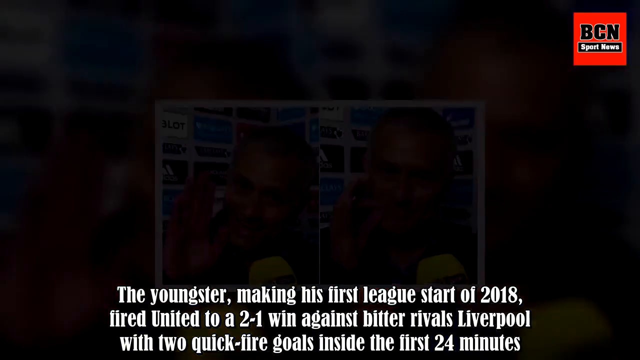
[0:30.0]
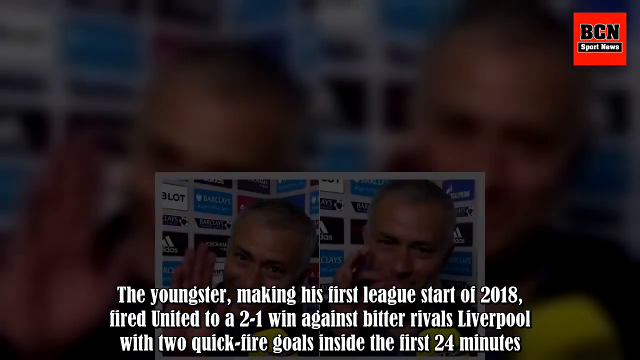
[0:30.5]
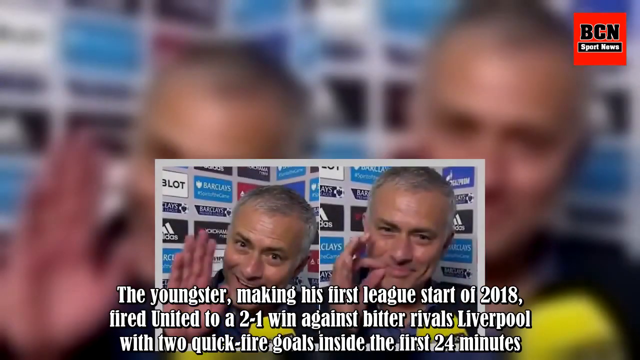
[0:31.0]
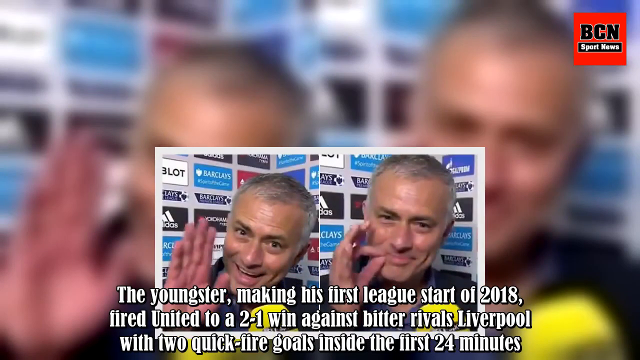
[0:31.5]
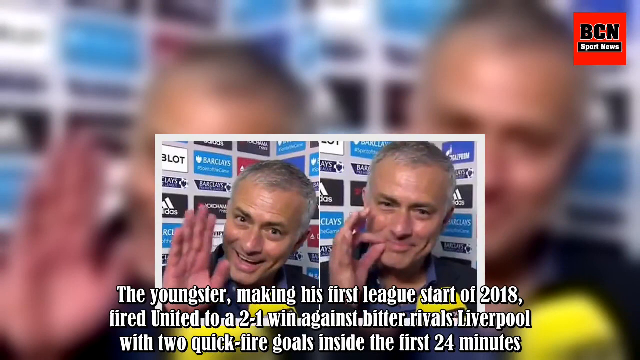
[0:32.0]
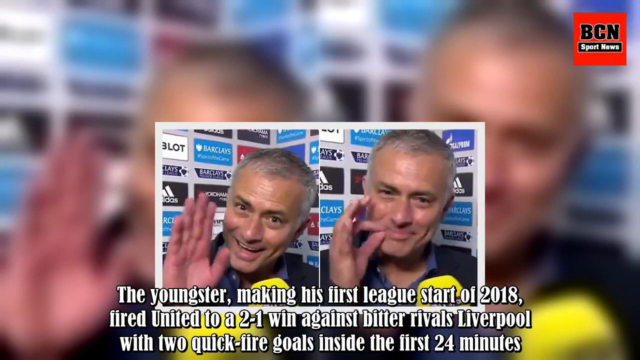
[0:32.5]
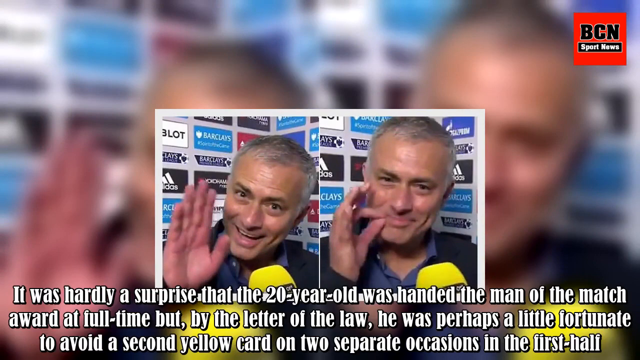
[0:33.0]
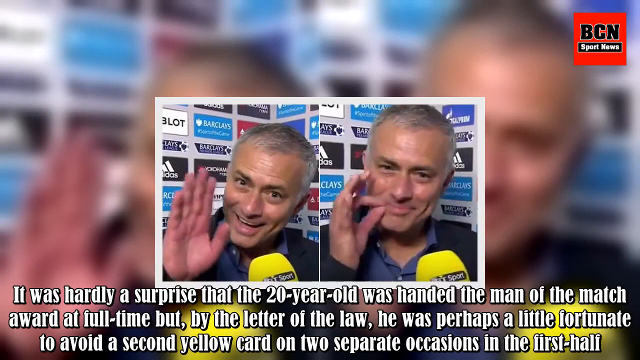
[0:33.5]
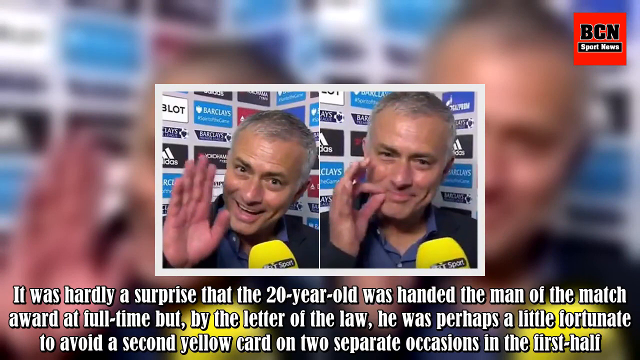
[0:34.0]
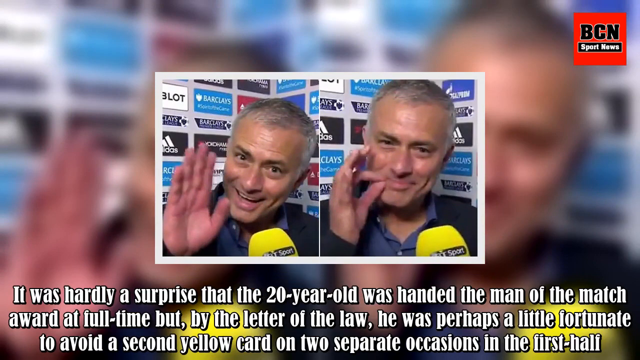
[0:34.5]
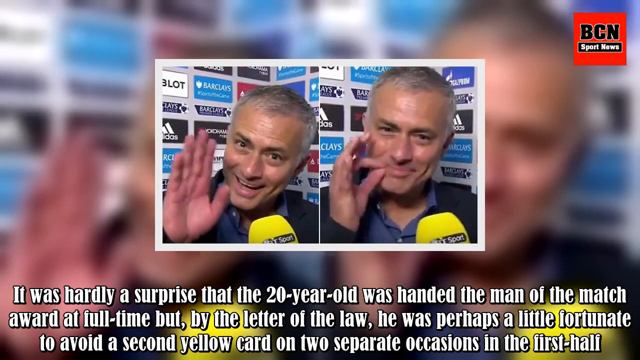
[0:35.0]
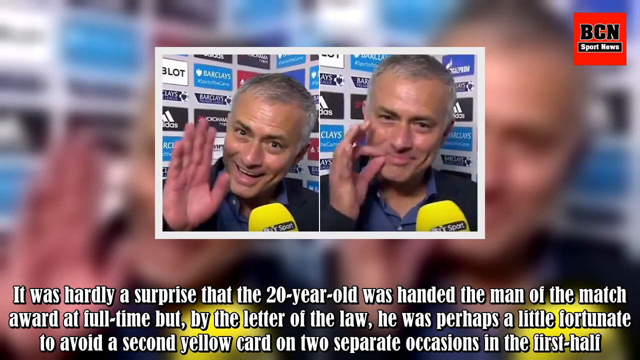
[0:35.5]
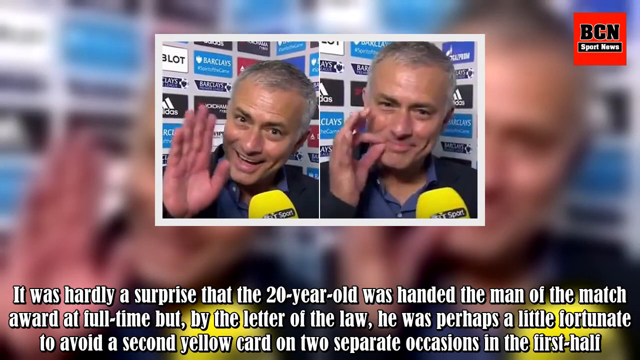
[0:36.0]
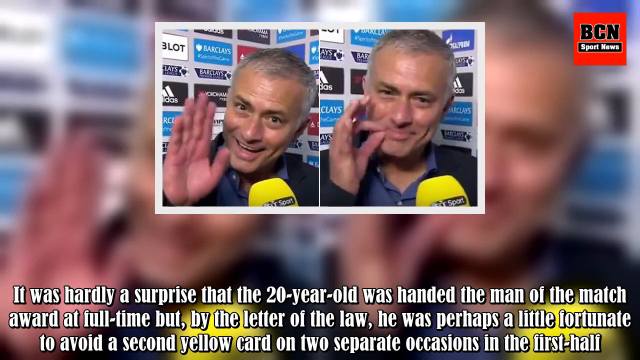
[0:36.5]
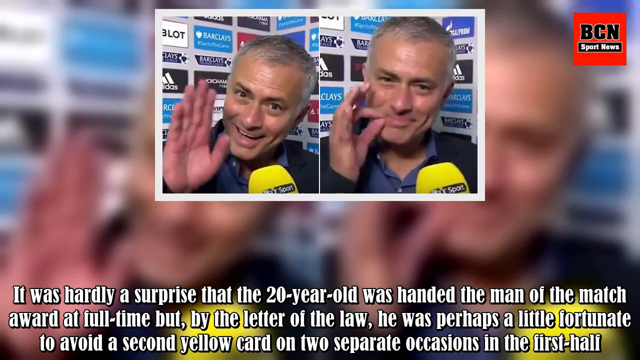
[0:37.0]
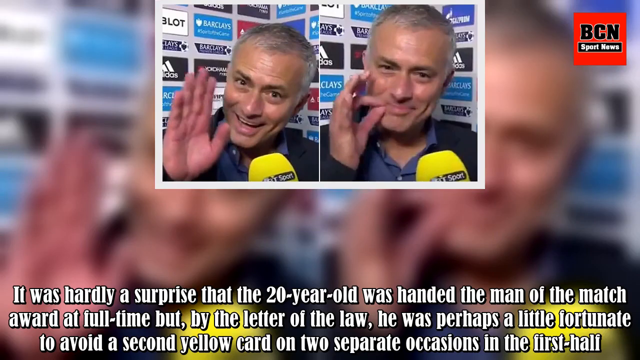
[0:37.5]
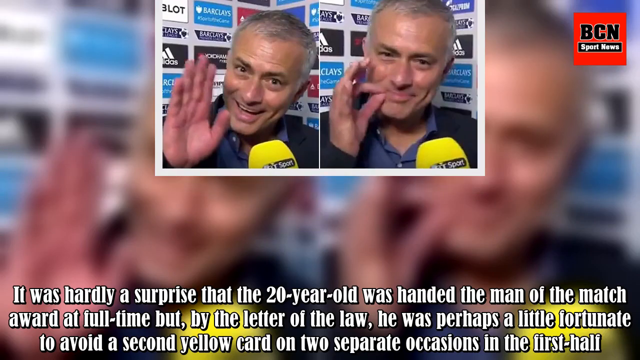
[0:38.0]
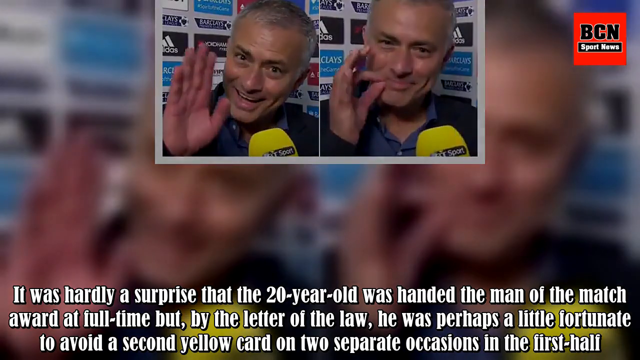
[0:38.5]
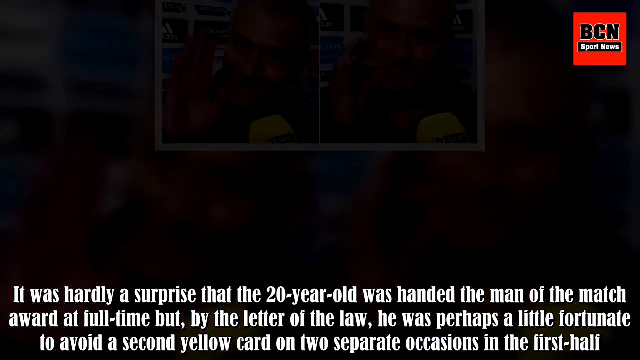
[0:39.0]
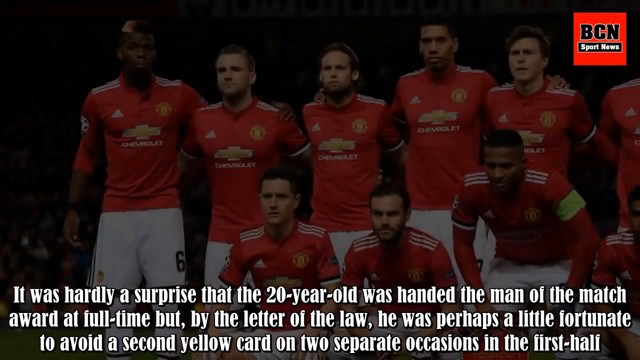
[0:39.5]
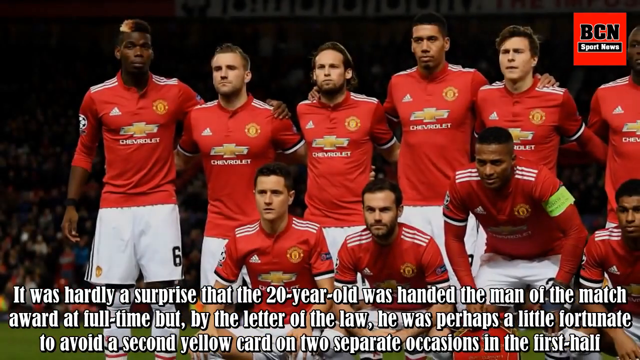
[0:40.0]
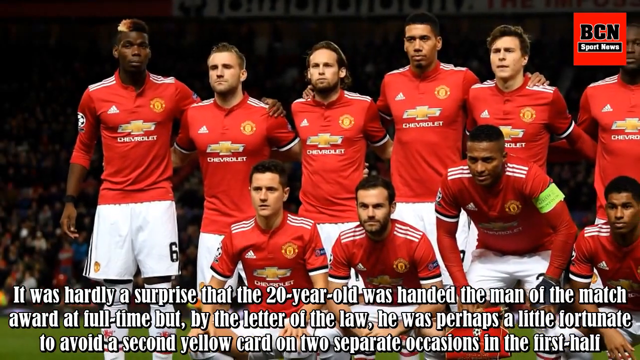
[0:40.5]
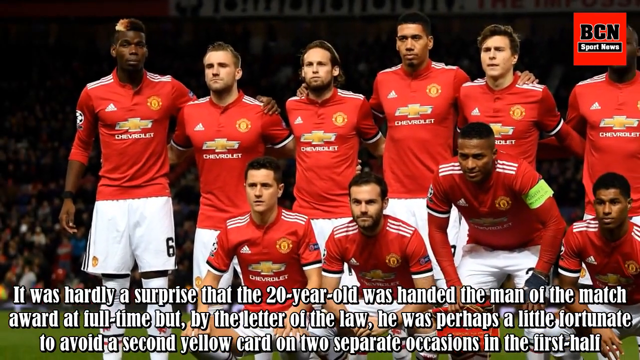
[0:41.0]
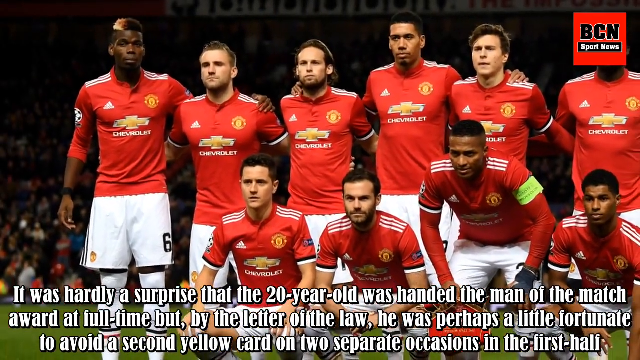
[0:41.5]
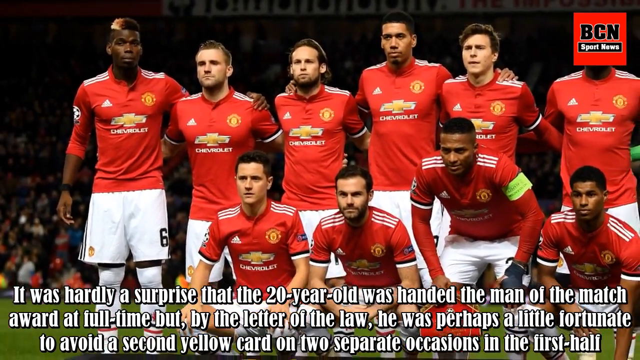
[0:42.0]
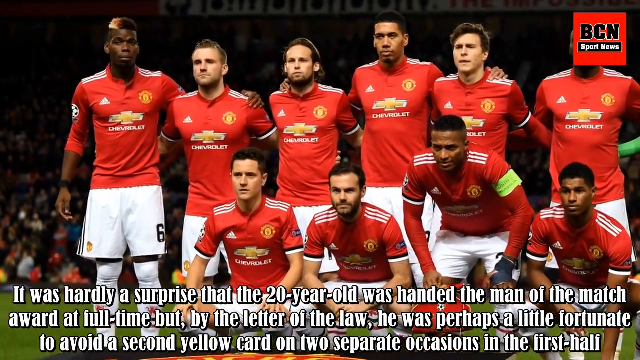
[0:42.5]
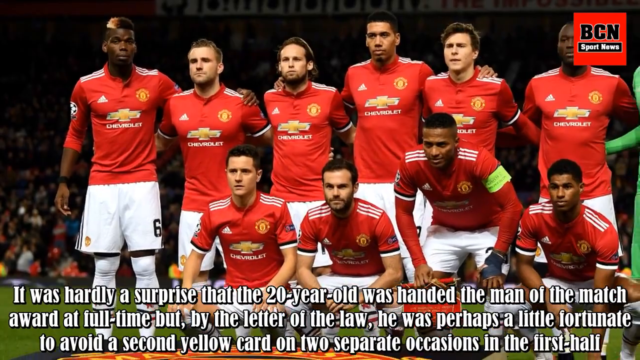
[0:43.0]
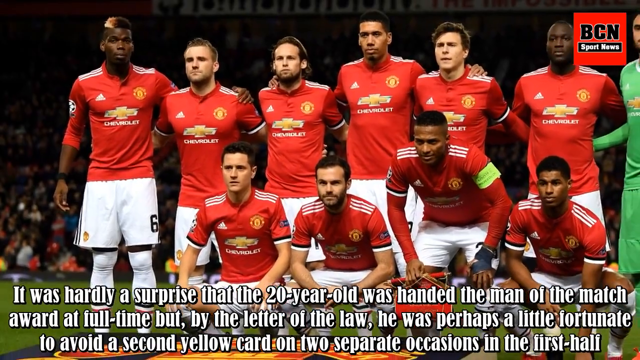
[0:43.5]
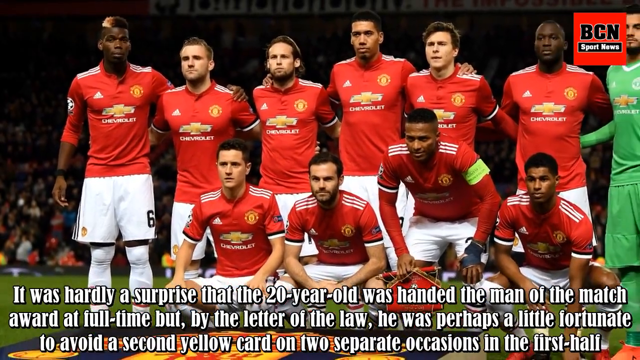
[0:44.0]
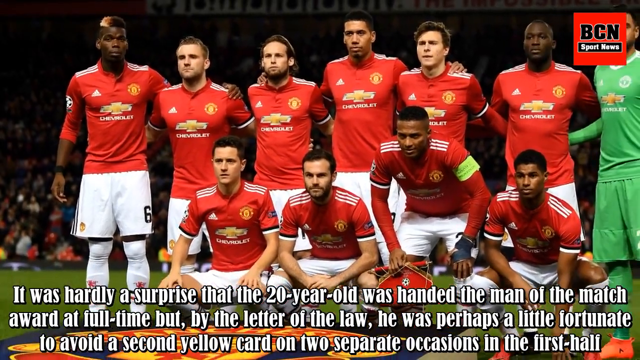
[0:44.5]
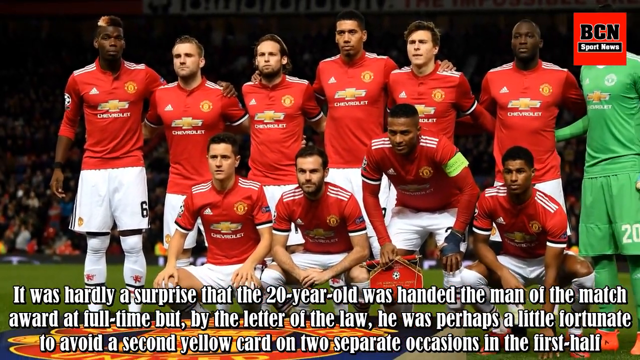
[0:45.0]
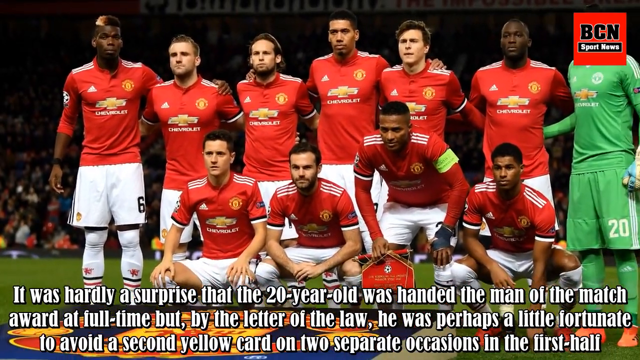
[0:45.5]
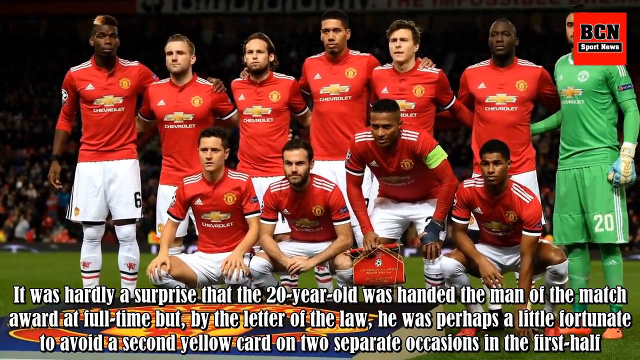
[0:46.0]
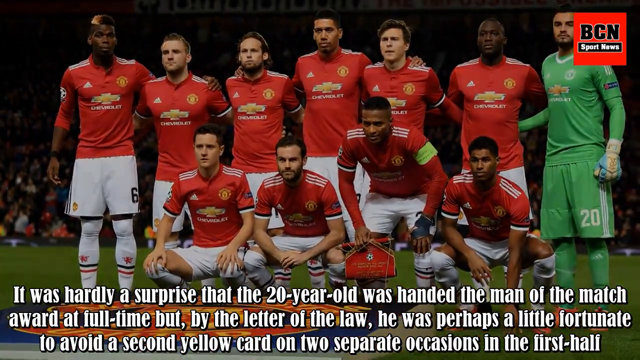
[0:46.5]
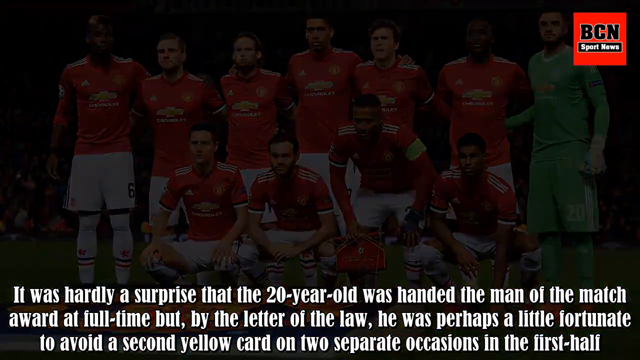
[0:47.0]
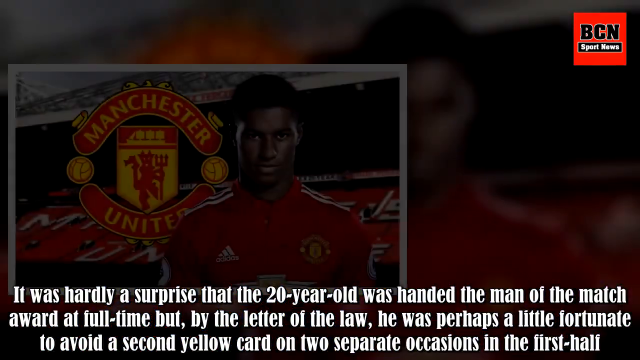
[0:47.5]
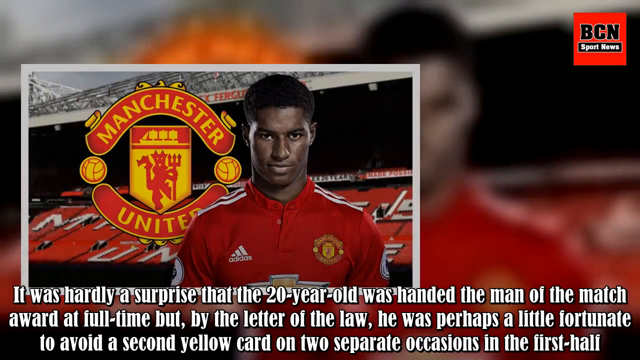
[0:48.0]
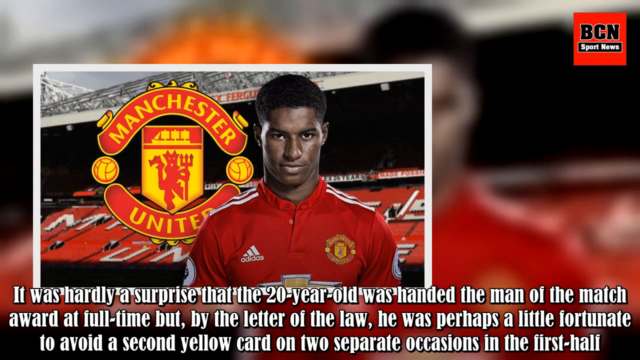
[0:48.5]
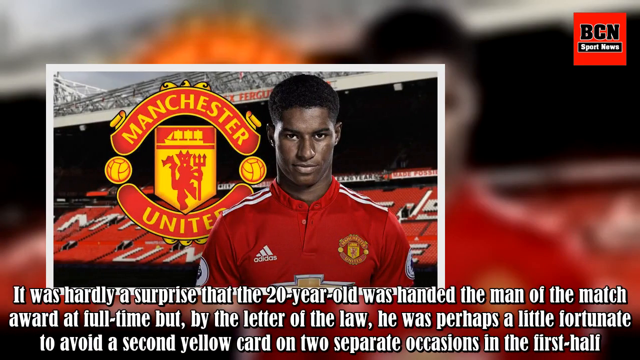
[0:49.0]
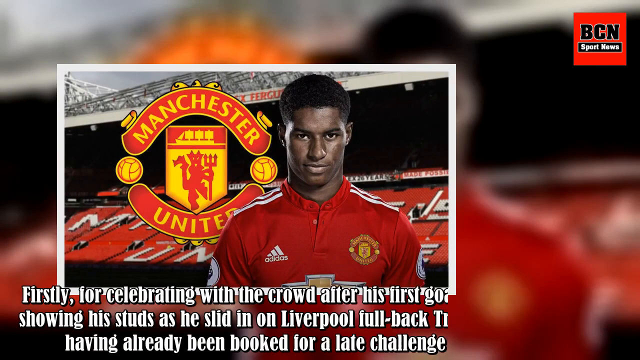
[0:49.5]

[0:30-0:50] A screen of text reads "the youngster making his first league start of 2018 fired United to a 2 to 1 win against bitter rivals Liverpool," followed by "it was hardly a surprise that 20 year old was handed the man of the match award at full time. But by the letter of the law, he was perhaps a little fortunate," and another sentence. The dual picture of the same person is shown, one with a hand up and the other with the hand making a slight cigarette-like gesture toward the face. The photo fades out to a team of soccer players with Chevrolet on their jerseys; the uniforms are primarily red and white, and the goalkeeper wears what seems to be a greenish uniform. Then a profile picture of another individual appears with "Manchester" on it; the individual is a person of color in a red uniform.